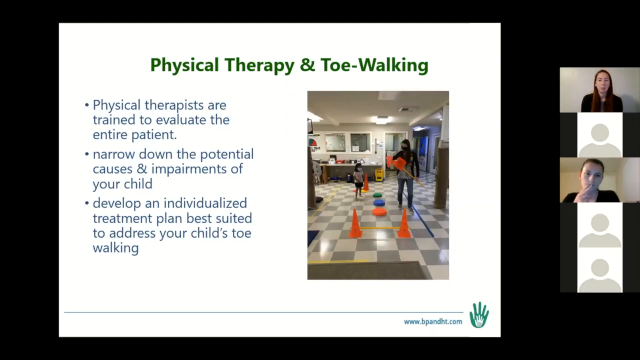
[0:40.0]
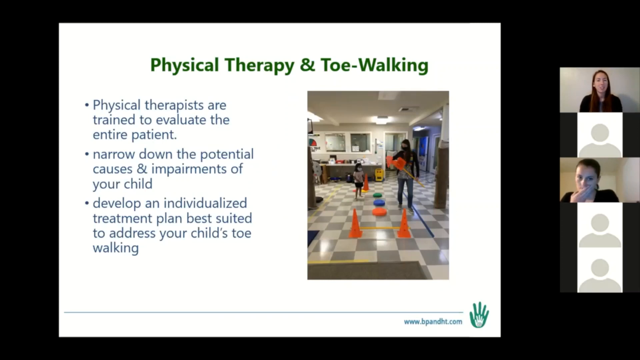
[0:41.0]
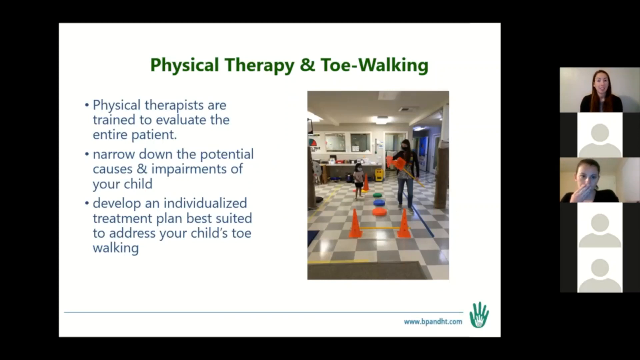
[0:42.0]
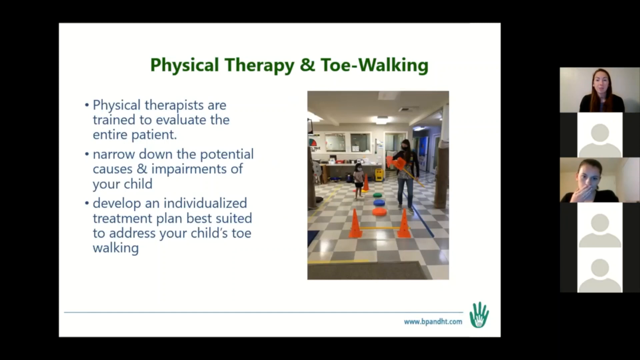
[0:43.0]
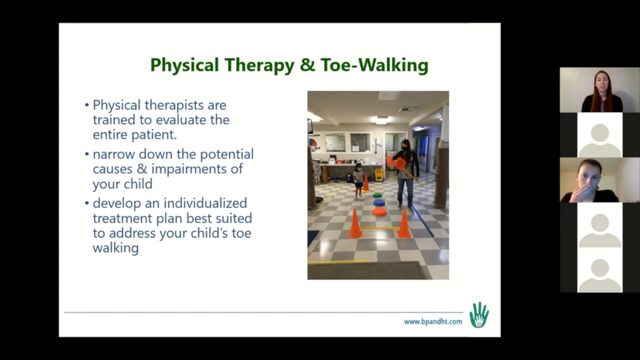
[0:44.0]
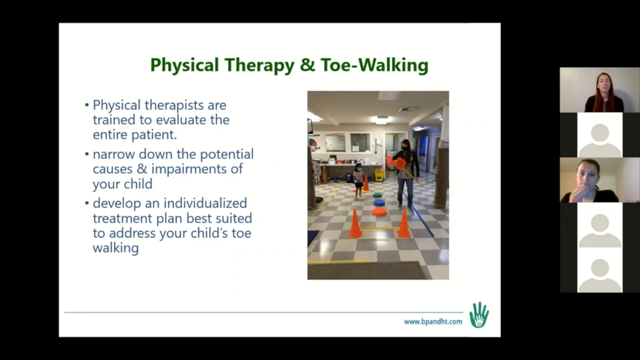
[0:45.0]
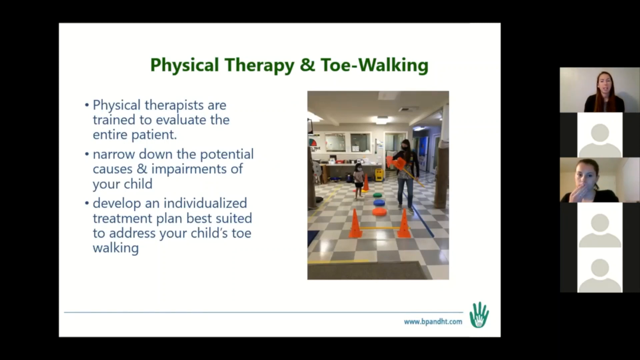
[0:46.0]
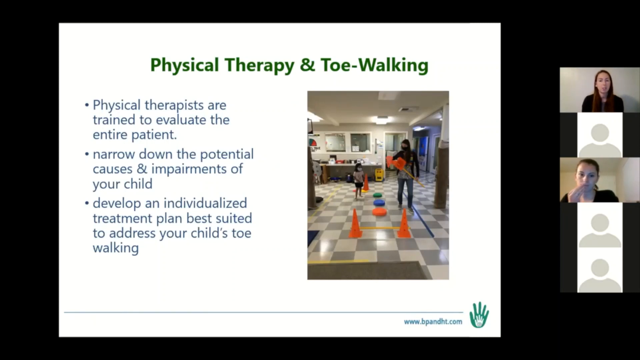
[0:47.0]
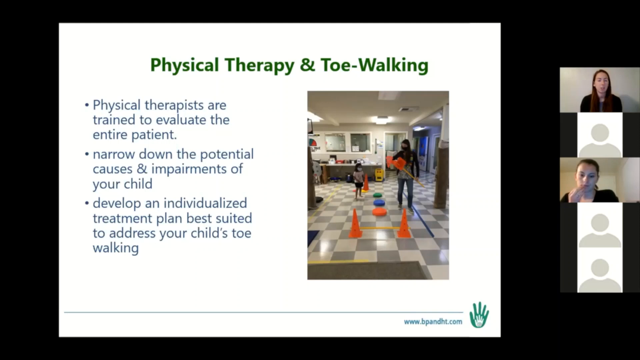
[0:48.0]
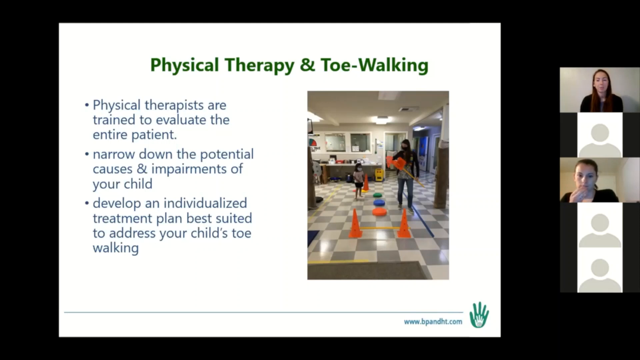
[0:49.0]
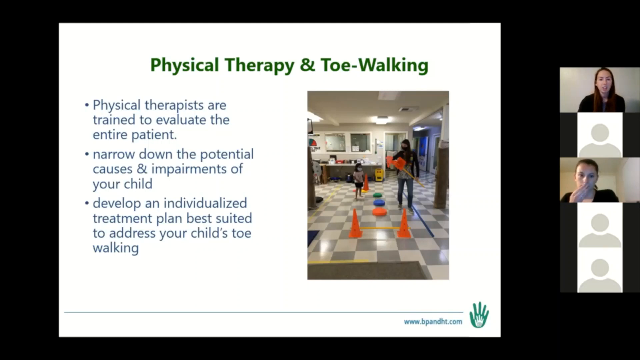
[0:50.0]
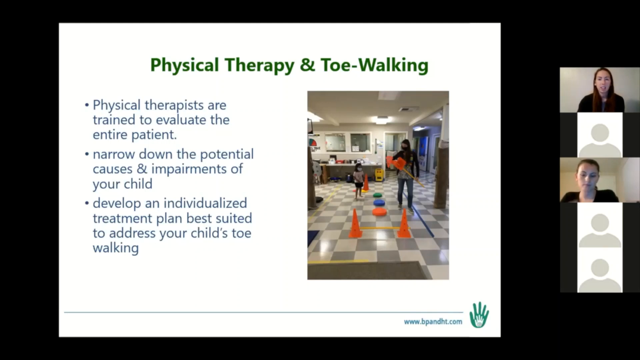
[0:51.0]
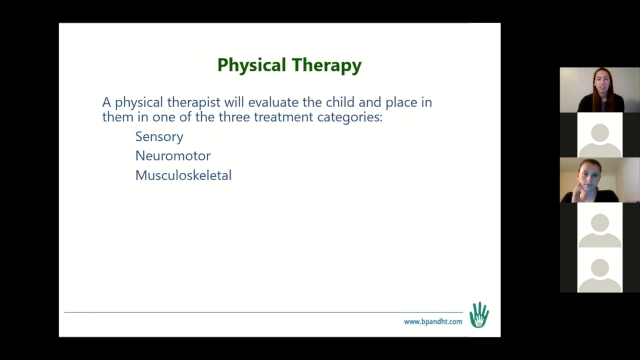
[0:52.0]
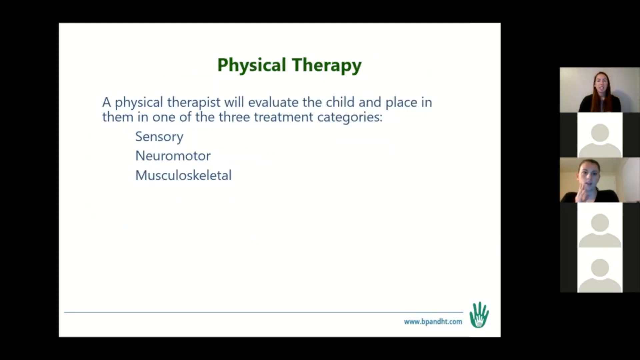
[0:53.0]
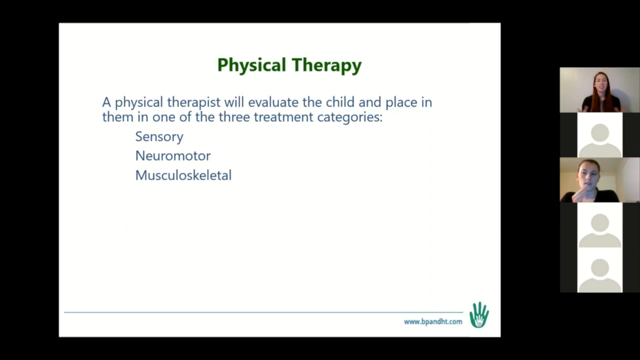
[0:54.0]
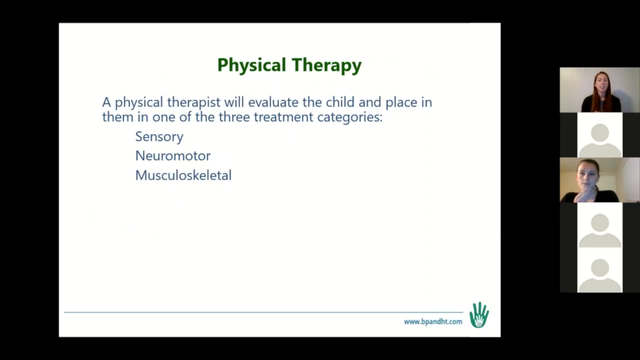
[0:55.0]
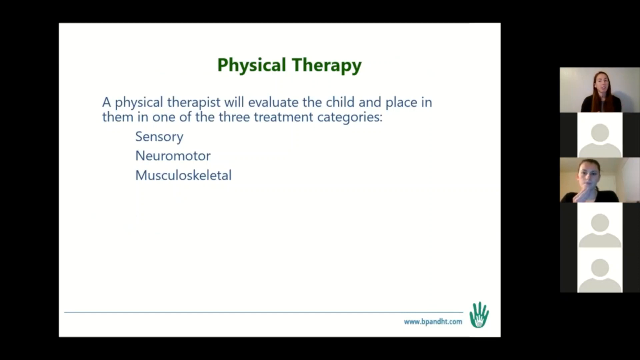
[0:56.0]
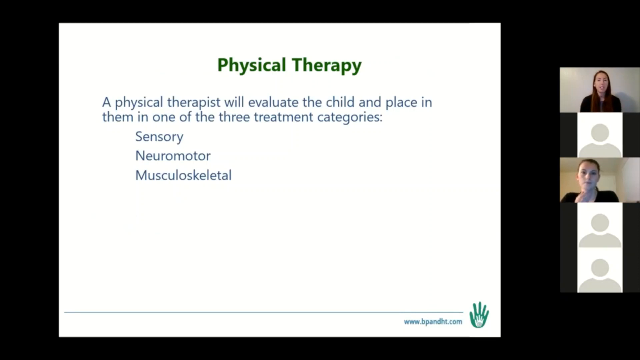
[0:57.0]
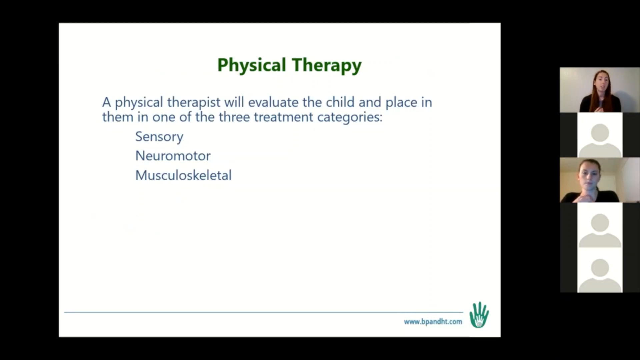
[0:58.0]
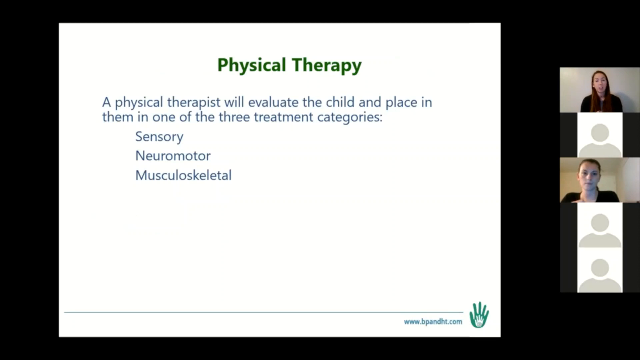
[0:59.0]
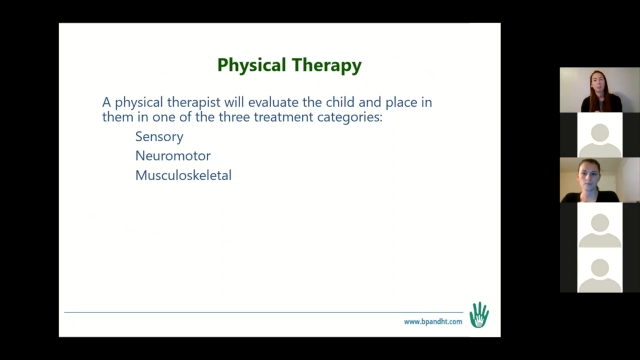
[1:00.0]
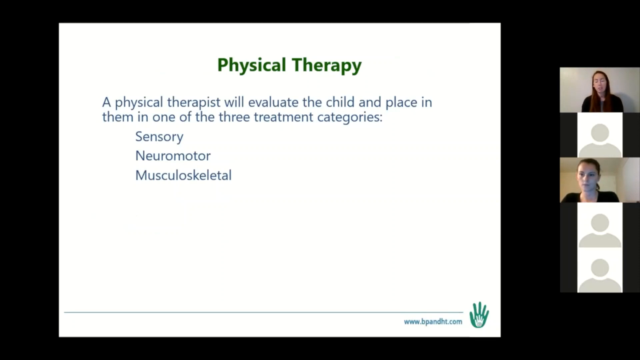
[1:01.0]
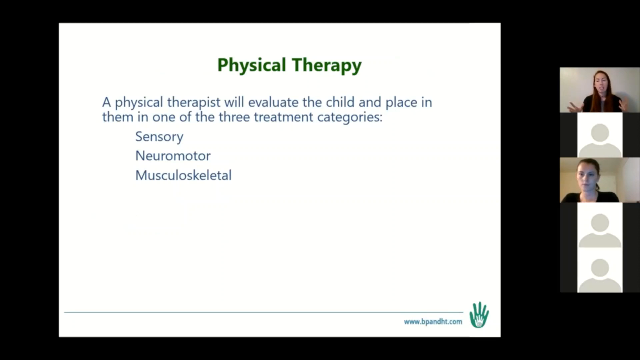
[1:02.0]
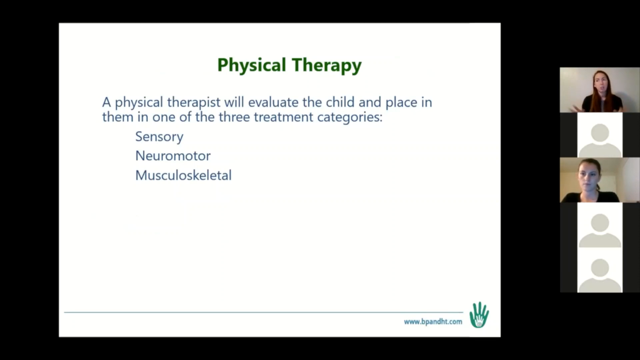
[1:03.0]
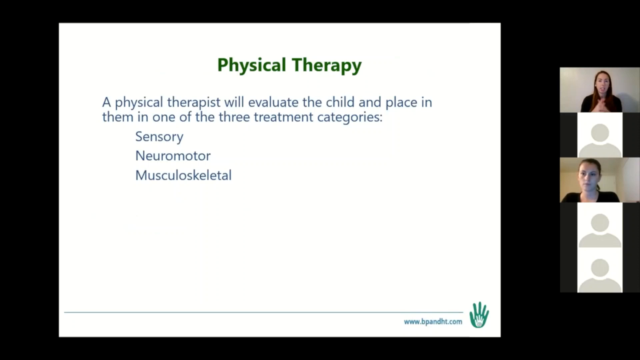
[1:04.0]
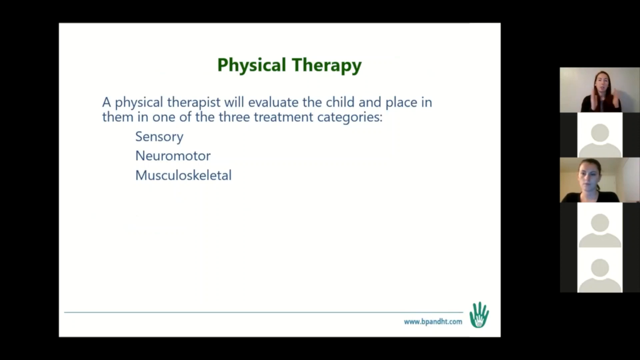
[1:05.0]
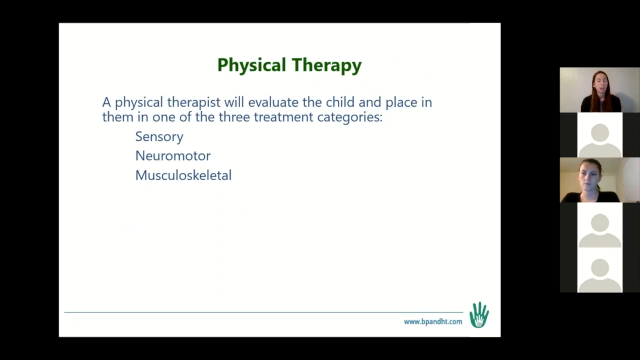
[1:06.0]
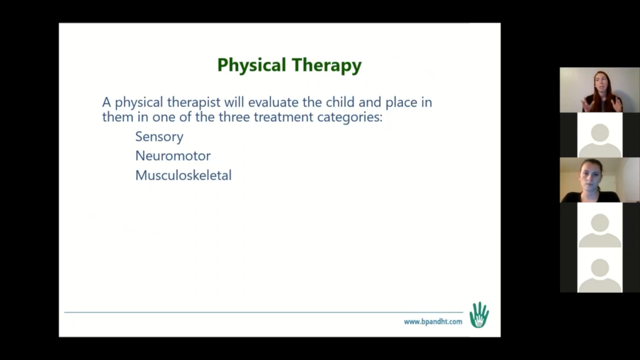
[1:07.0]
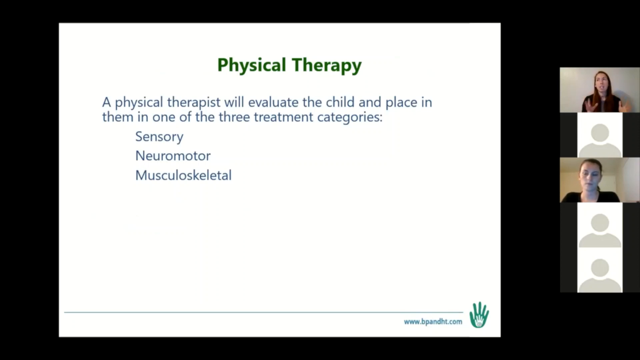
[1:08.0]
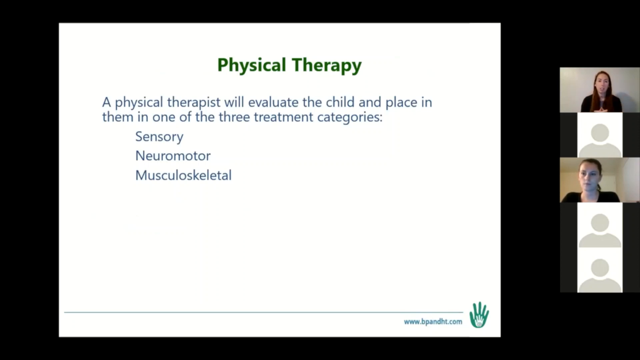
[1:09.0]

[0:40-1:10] A live video conference is displayed on the screen, with participant icons arranged vertically along the right side. The first and third icons show live video feeds of two women dressed in black outfits, seen from the head and shoulders, while the second, fourth and fifth participants have only icons displayed. The slide presentation on screen is titled "Physical Therapy and Toe-Walking" and has a white background, with three bullet points of information about physical therapy and toe-walking on the left and, on the right, an image of a woman and a child standing on a floor of gray and white tiles. The participant at the top is speaking, her head moving slightly. The third participant has her hand up and rests her head on her hand. The slide changes to a new one titled "Physical Therapy", which reads "a physical therapist will evaluate the child and place them in one of the three treatment categories, sensory, neuromotor, musculoskeletal."